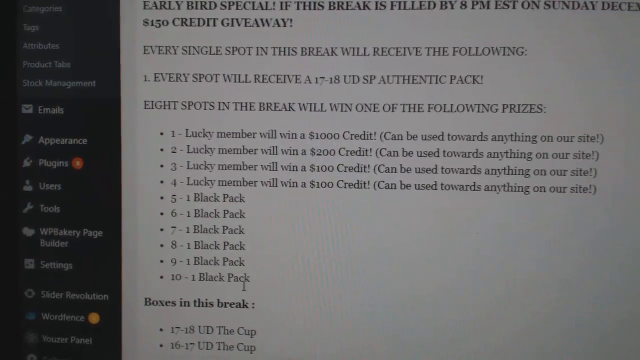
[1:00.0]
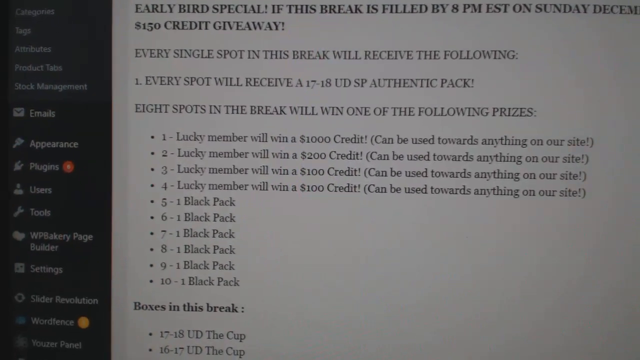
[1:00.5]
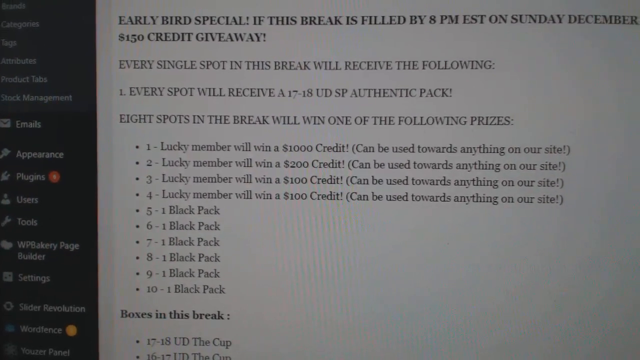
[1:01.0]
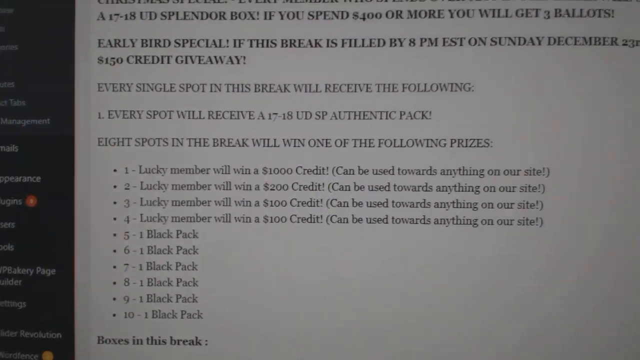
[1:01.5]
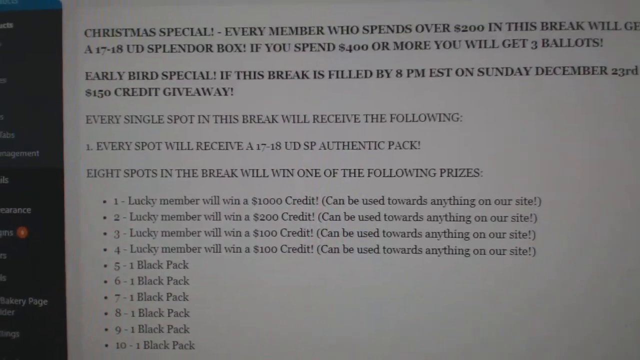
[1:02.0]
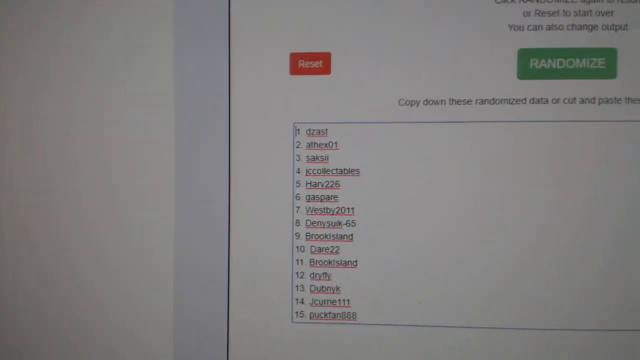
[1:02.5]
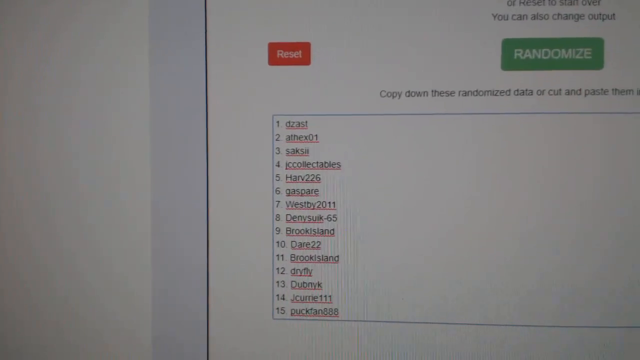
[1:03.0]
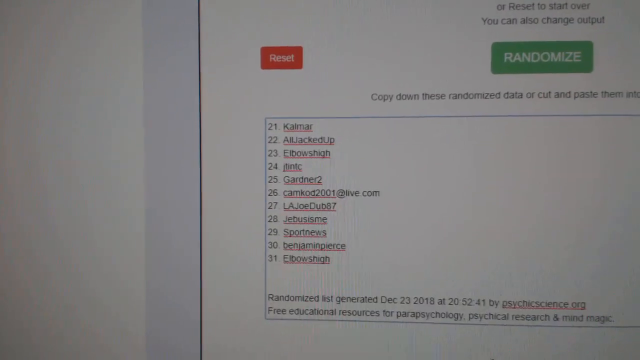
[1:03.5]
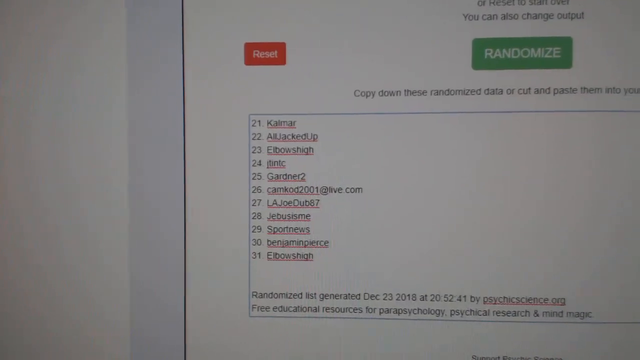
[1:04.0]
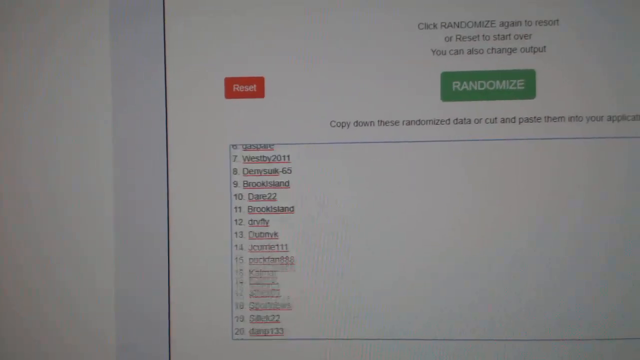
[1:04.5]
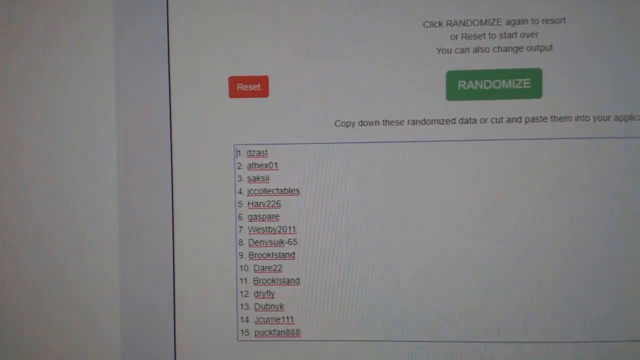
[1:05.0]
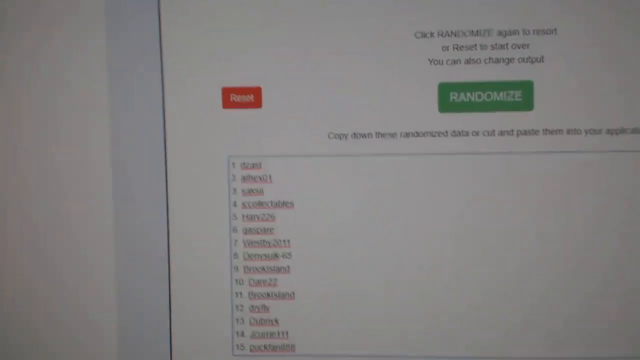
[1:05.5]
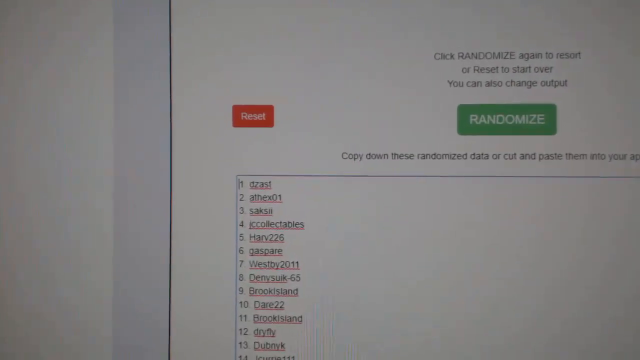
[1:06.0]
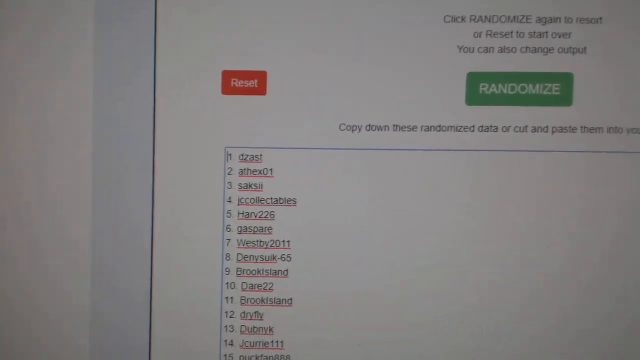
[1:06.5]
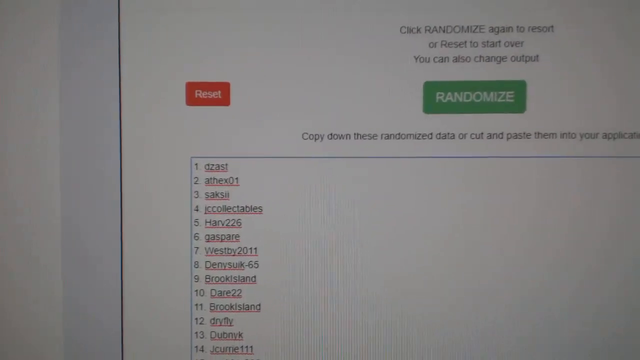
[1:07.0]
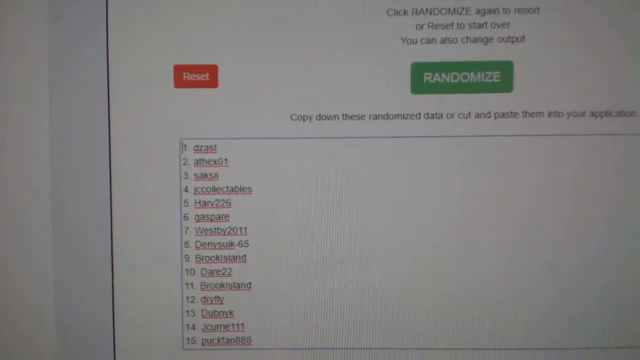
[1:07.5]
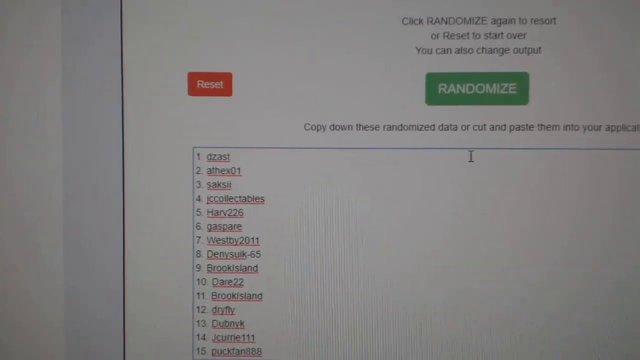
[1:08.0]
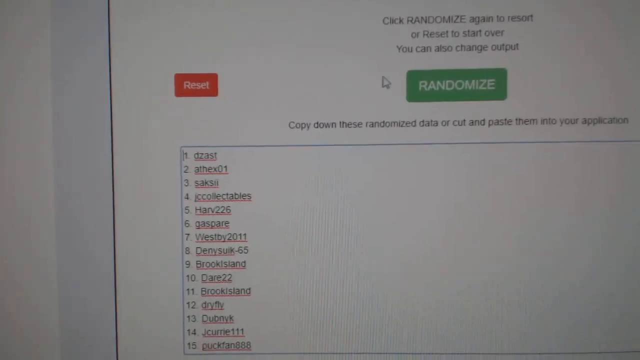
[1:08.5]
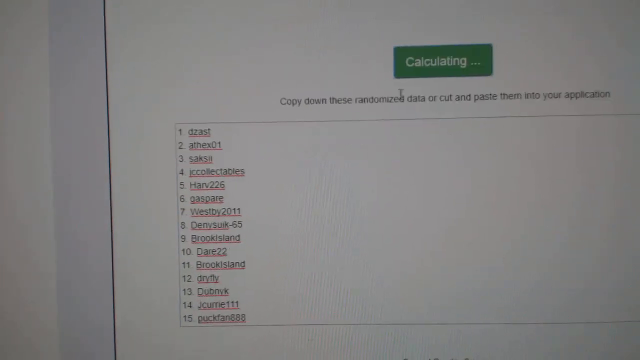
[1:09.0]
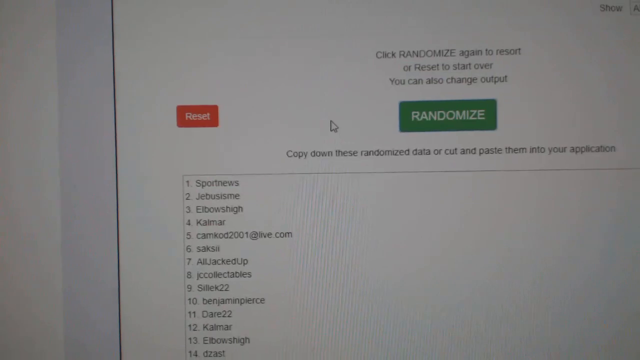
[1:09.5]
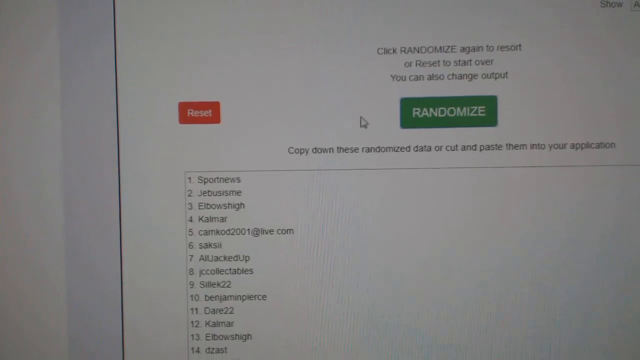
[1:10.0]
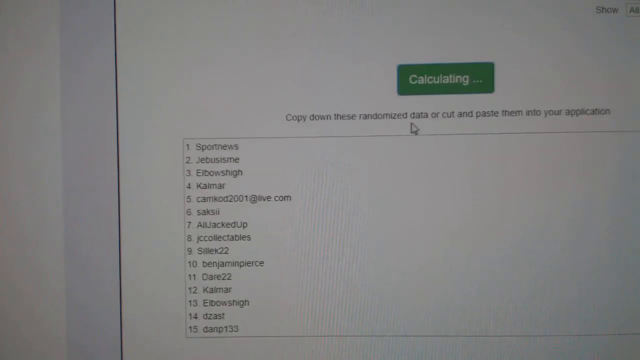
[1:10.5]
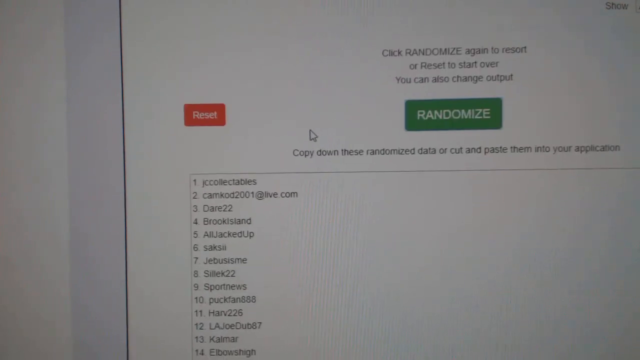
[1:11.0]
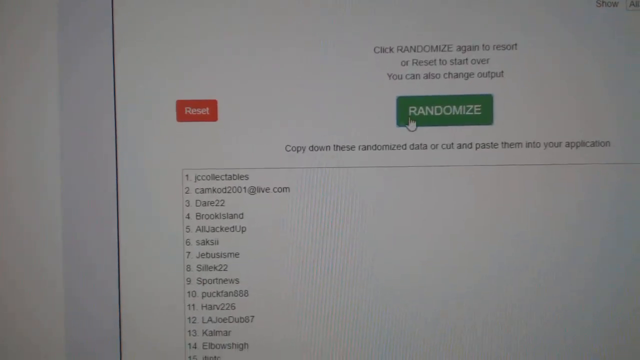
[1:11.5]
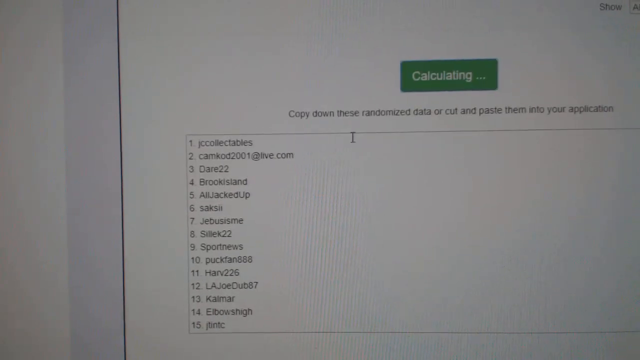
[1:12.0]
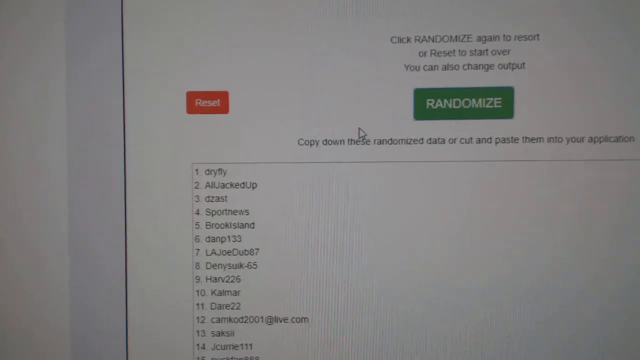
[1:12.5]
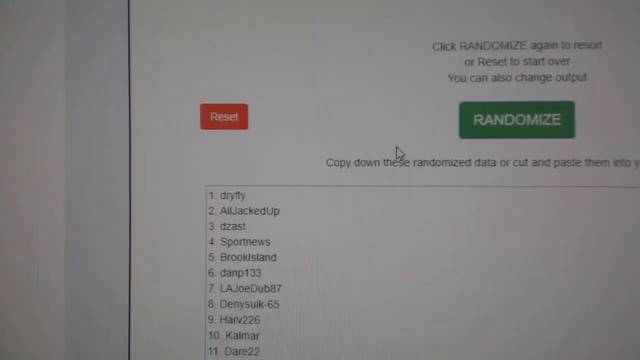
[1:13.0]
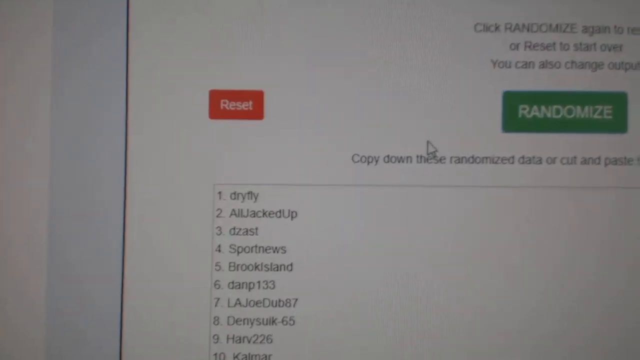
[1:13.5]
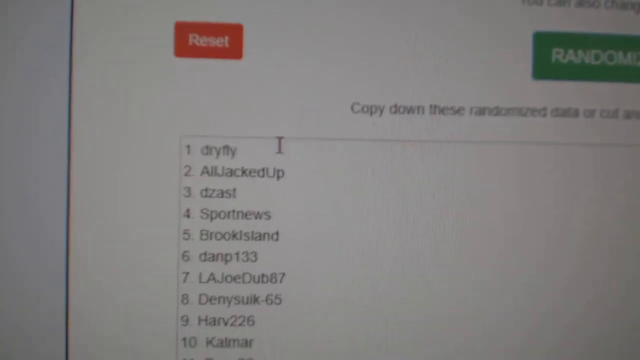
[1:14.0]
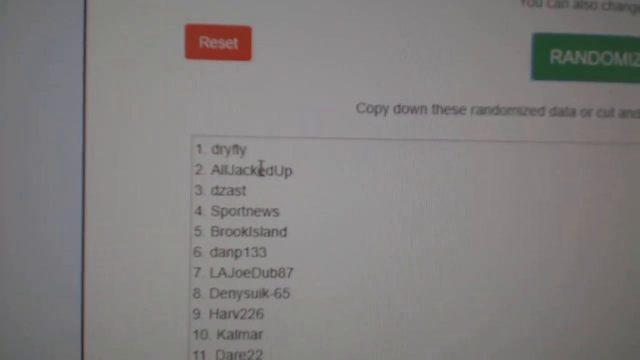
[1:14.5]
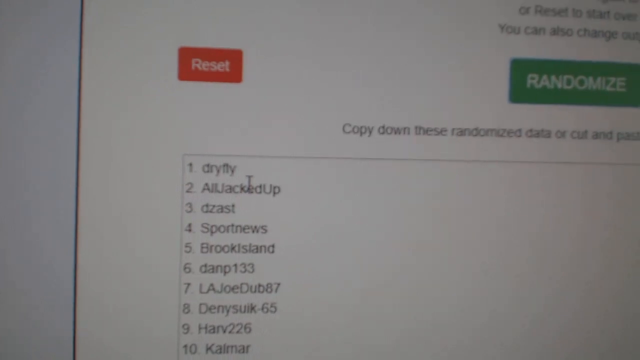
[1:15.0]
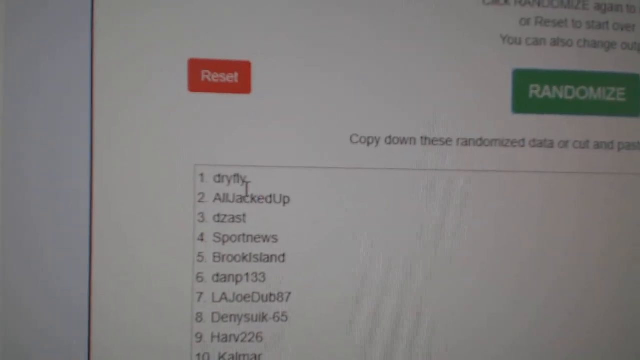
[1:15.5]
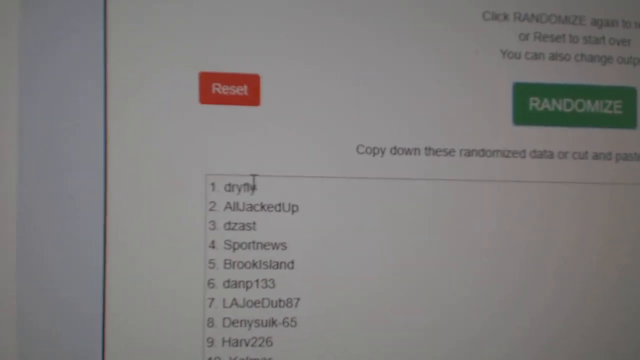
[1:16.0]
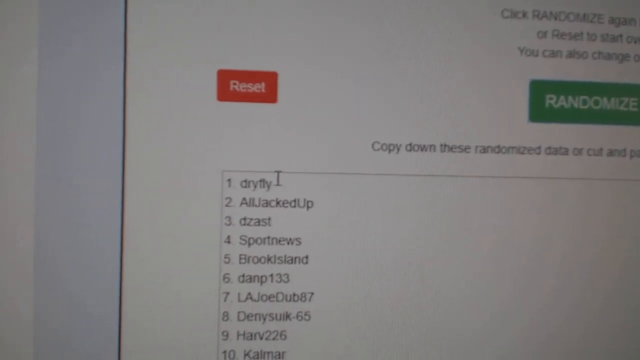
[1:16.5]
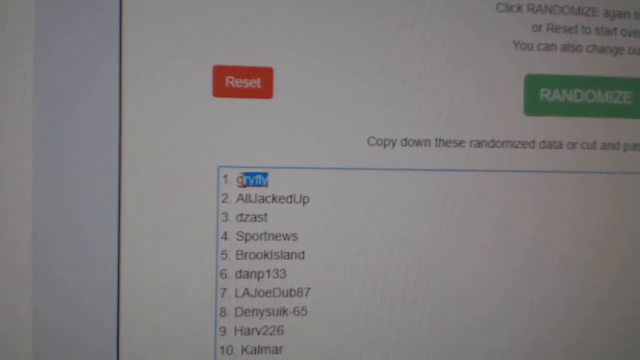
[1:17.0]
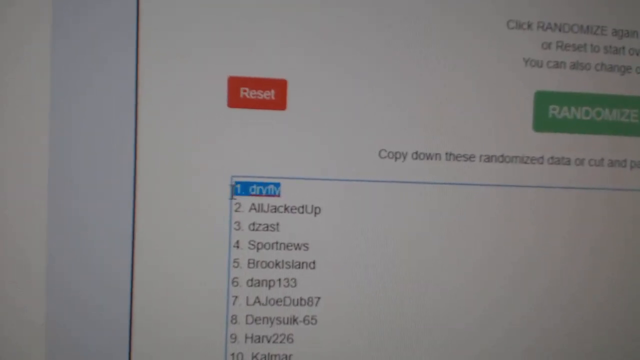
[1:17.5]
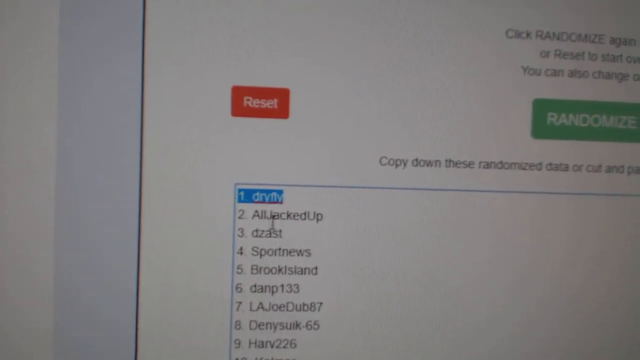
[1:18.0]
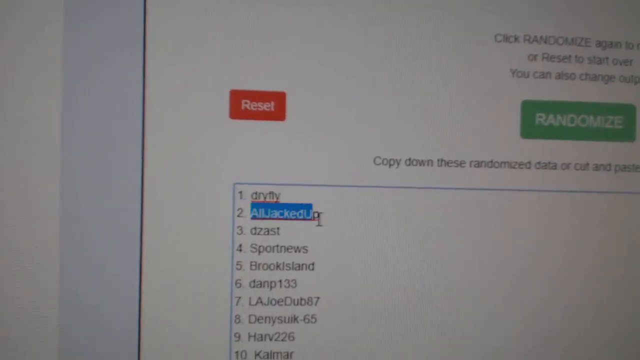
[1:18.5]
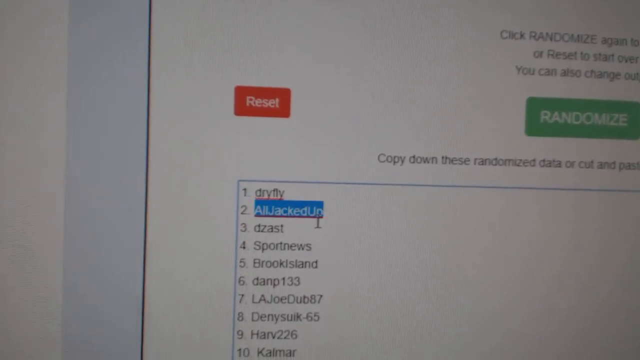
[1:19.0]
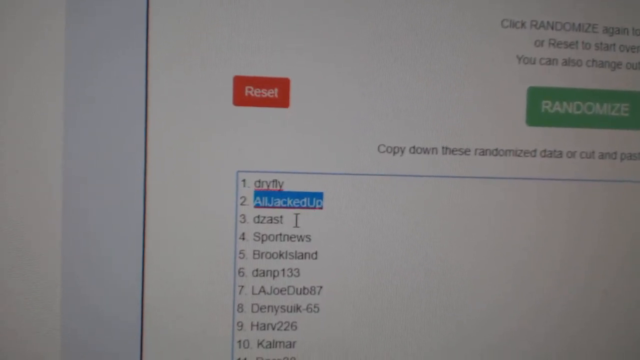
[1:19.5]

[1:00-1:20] Blurry footage of a computer screen is being recorded from another device. Some text appears, then the view moves to a page with "randomize" in a green box and "reset" in red on the other side. Text reads "click randomize again to resort or reset to start over. You can also change output." Some kind of list is being created, but it cannot be read. The person keeps clicking randomize and moving the mouse away. The list appears to consist of something like usernames, all on a white background. The person then uses the mouse to select the first couple of names. The footage is very shaky.